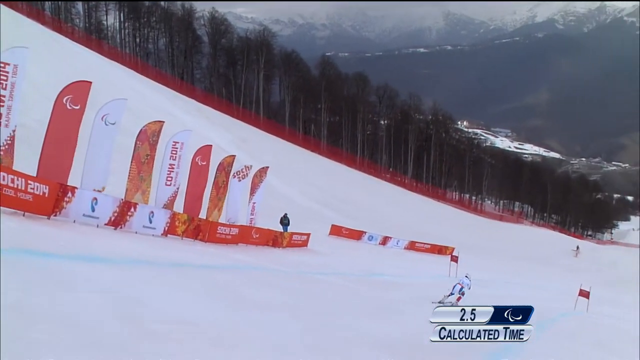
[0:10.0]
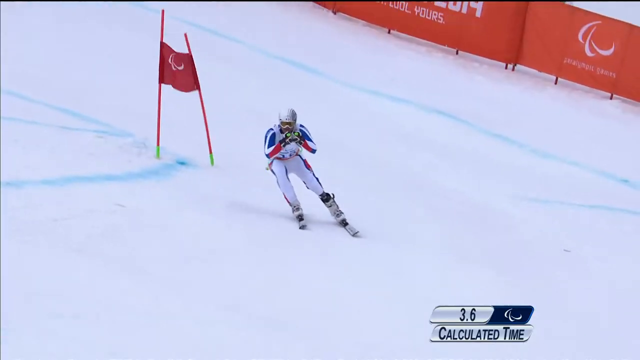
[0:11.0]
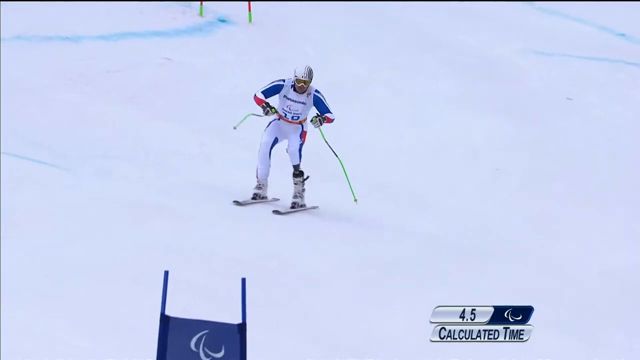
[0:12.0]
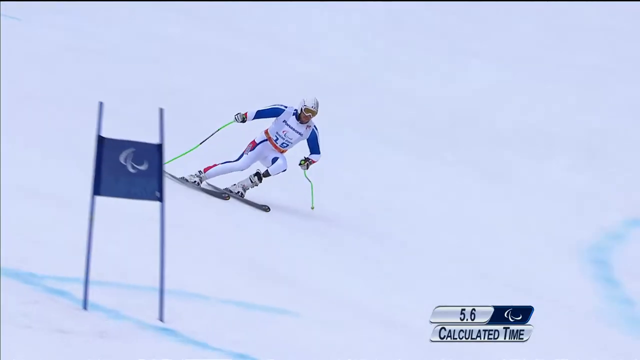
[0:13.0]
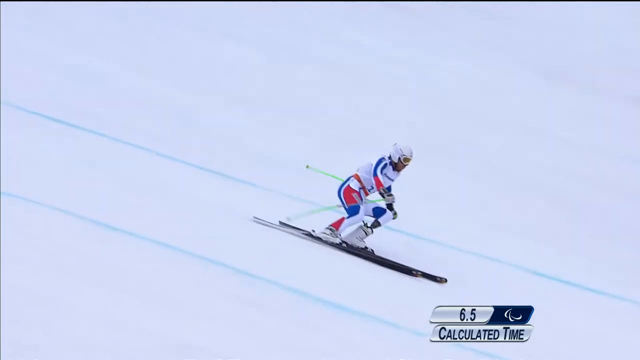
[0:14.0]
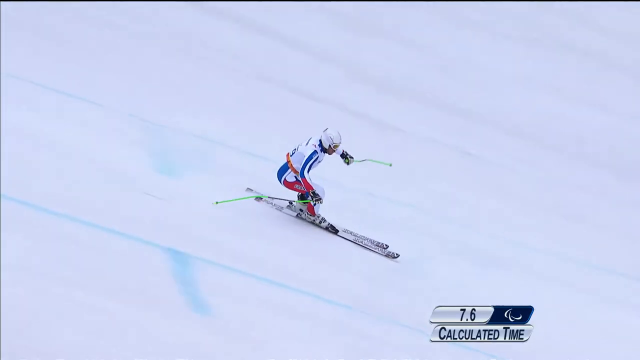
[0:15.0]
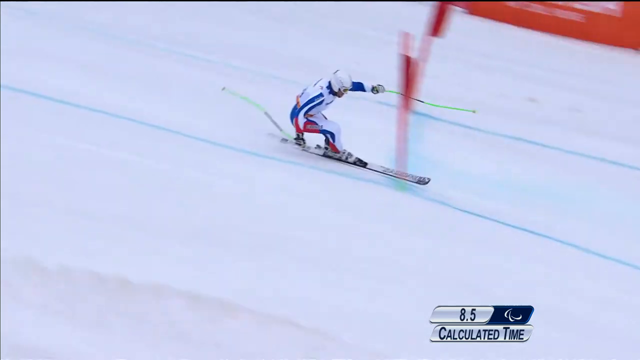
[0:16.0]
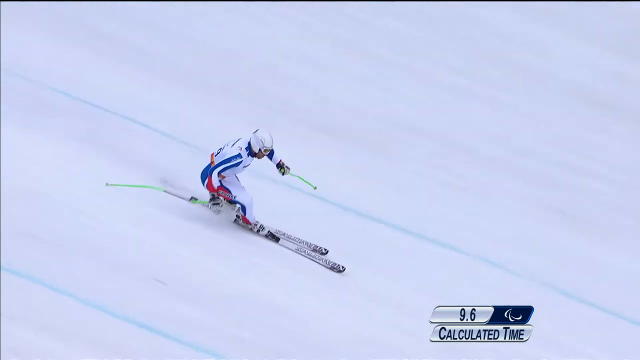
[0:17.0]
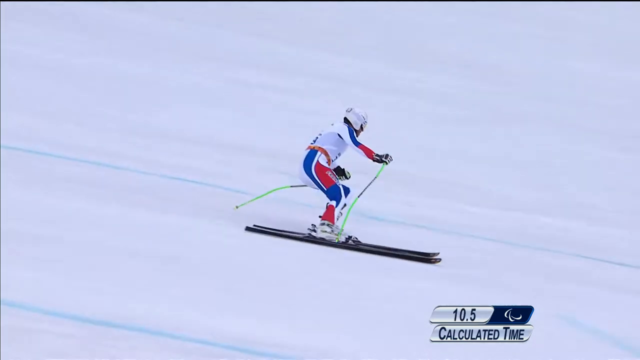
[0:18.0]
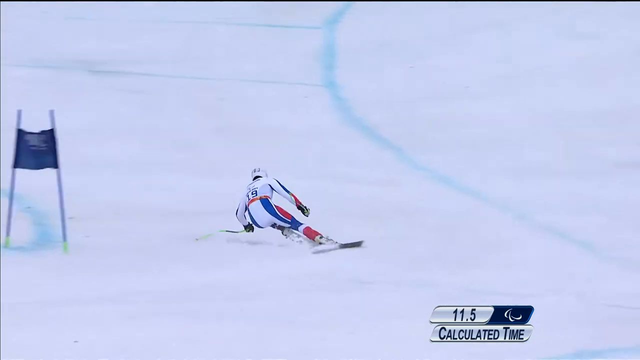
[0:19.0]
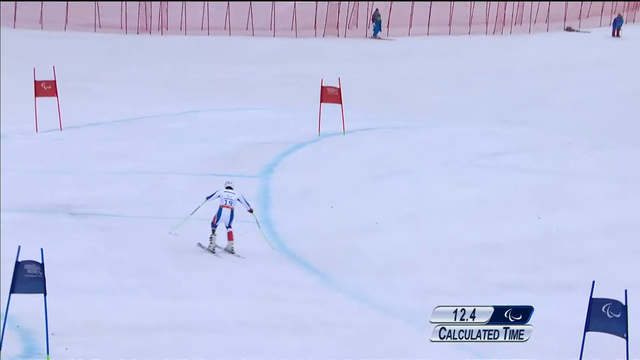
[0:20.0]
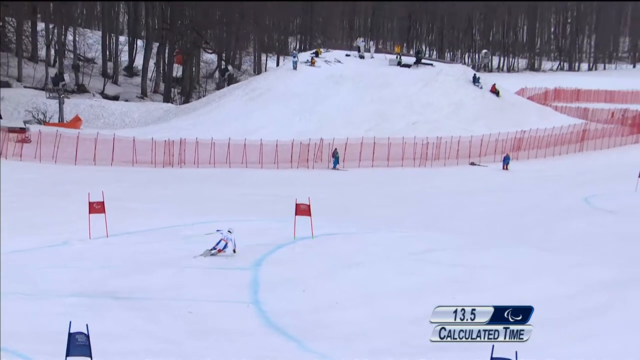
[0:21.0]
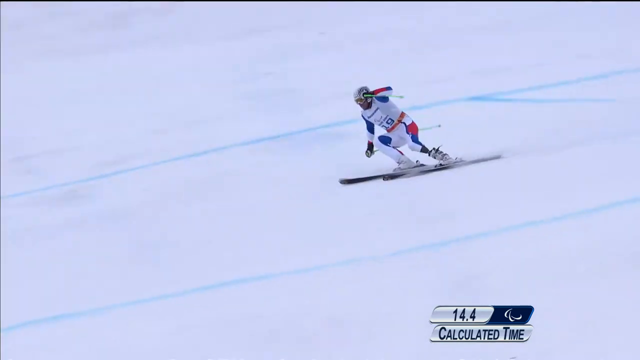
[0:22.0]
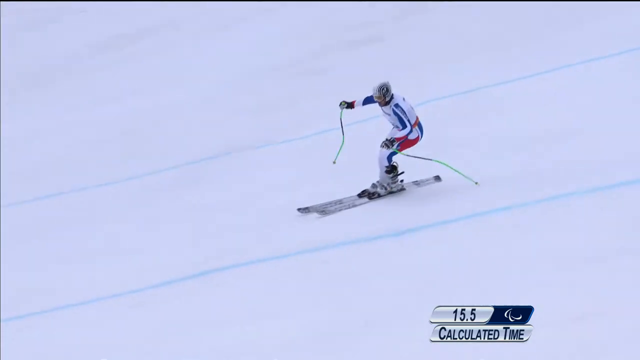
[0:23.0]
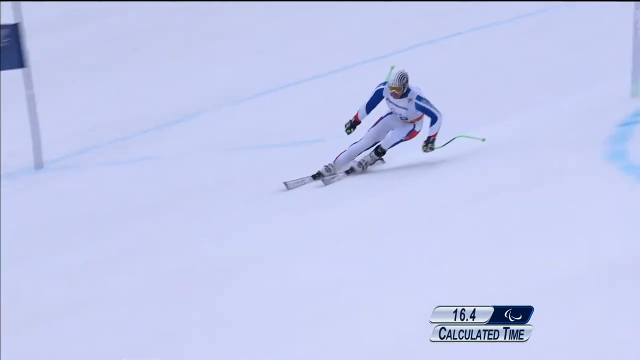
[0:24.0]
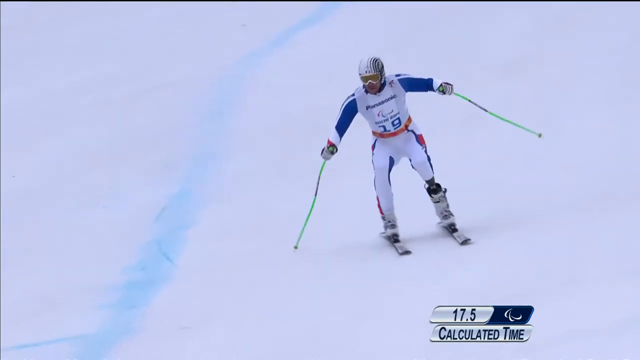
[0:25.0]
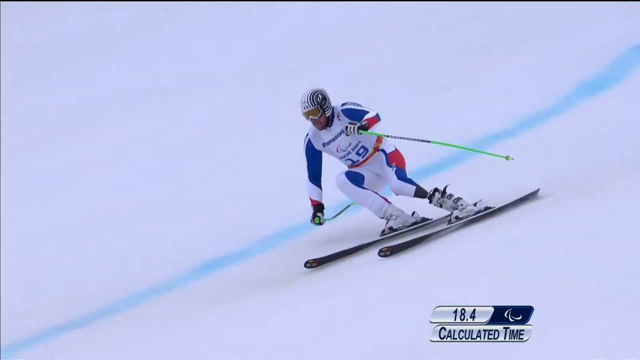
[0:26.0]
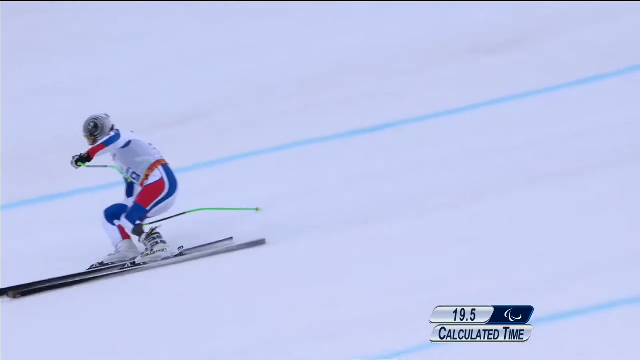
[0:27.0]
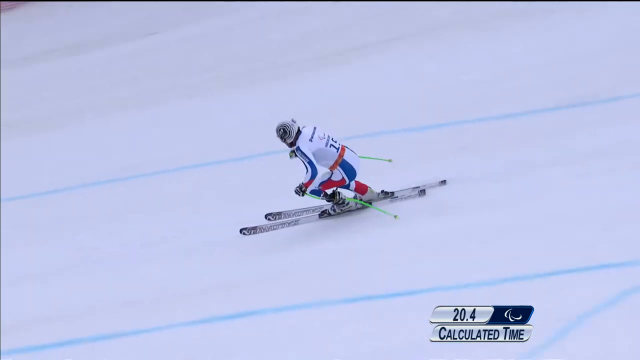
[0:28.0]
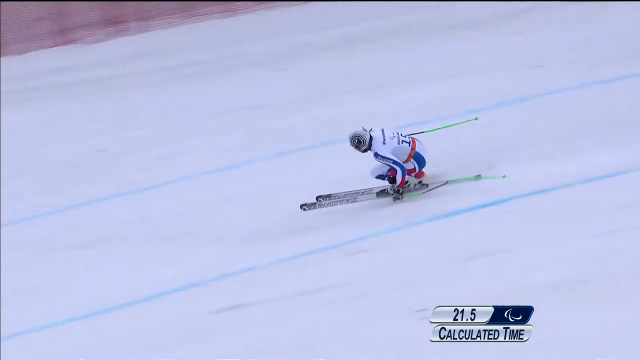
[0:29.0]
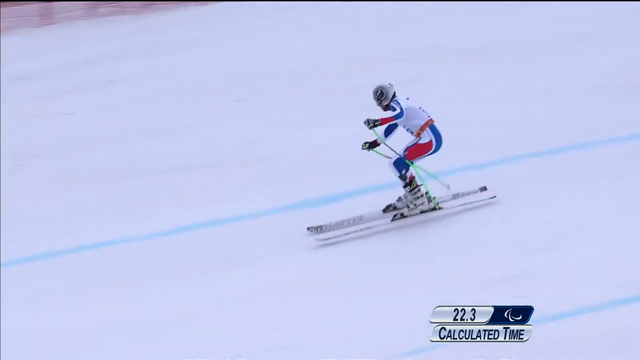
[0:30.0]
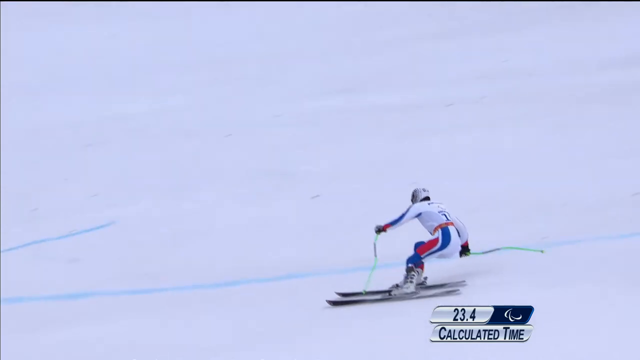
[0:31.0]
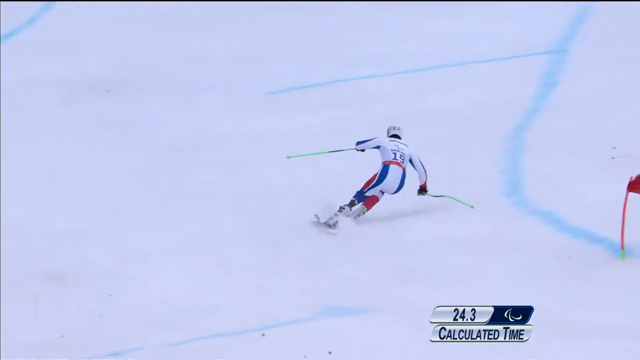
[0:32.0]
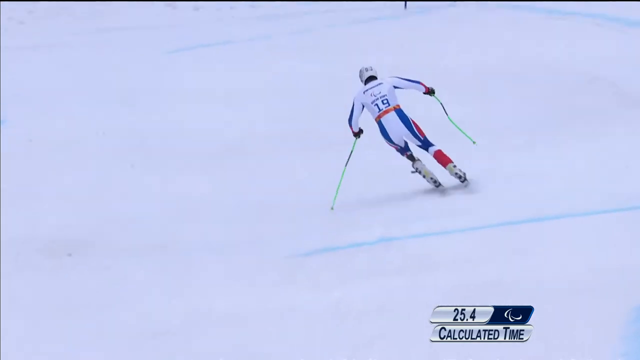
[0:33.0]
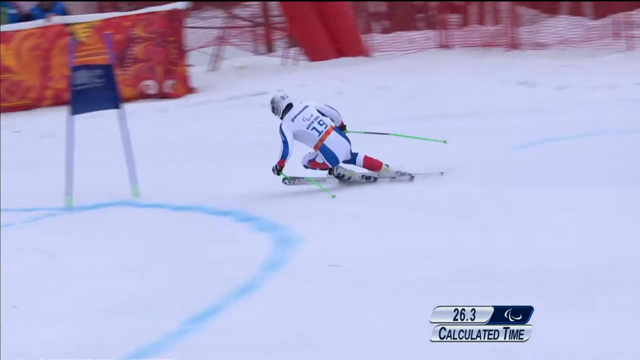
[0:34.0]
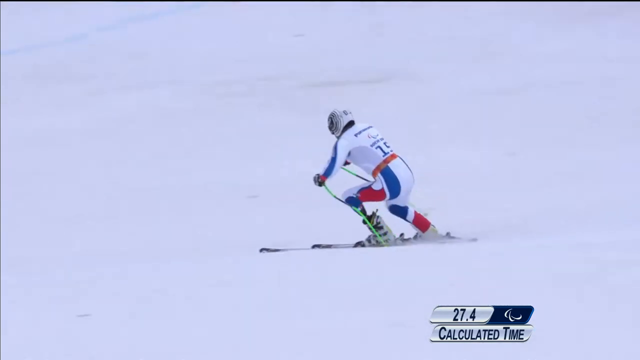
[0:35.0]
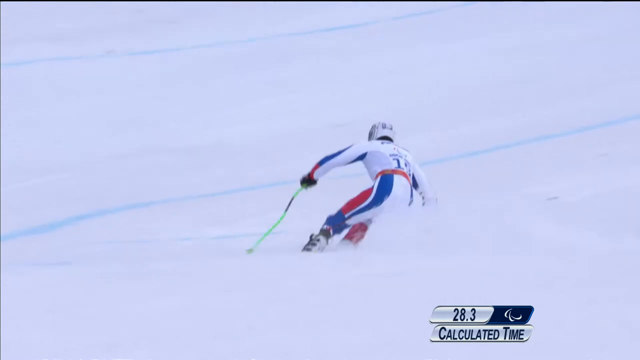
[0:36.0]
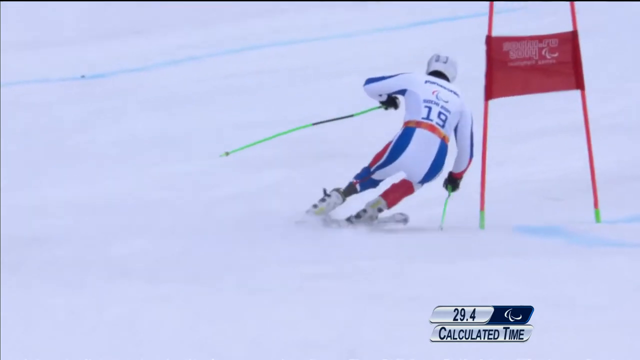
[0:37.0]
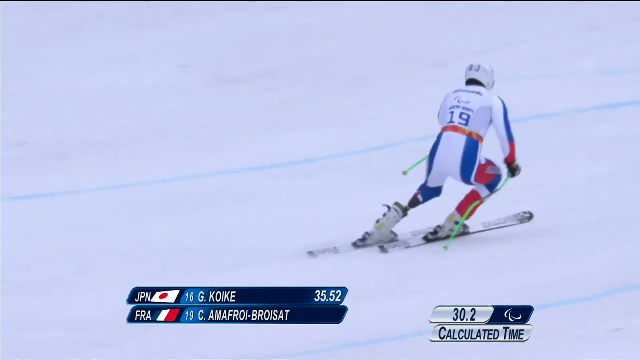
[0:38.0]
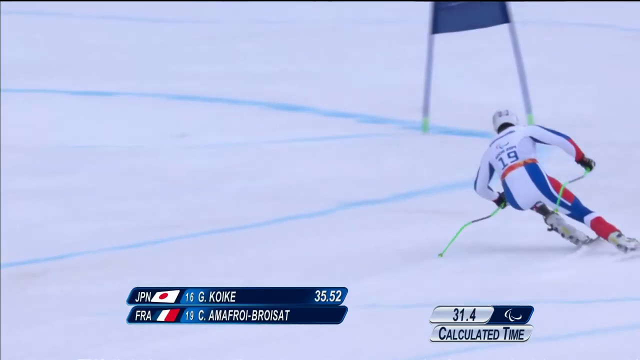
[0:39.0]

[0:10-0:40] He skis down fast, curving through the snow left and right again and again. His poles look like they are barely touching the top of the snow, so he almost glides, slowing down using his turns and the weight of his body. Early on he puts his hands together, and he balances himself left and right, putting all his weight on one ski. His skis can be seen carving the snow, with a lot of pressure on one foot as he turns a tight corner. There are flags alongside the pathway he skis on, which is outlined with light blue dye, and it seems he has to stay within those lines.